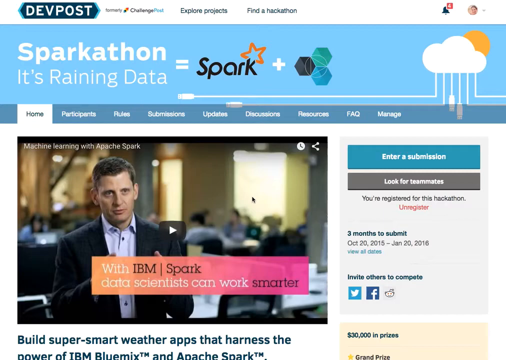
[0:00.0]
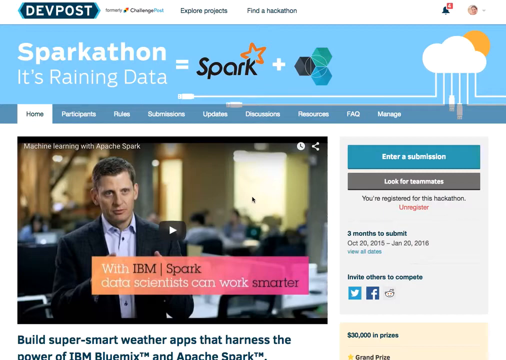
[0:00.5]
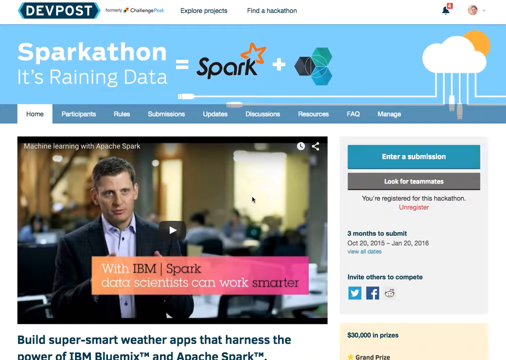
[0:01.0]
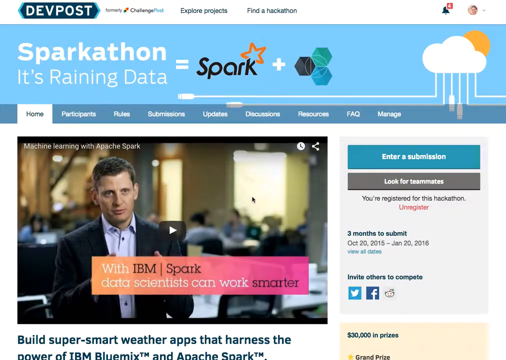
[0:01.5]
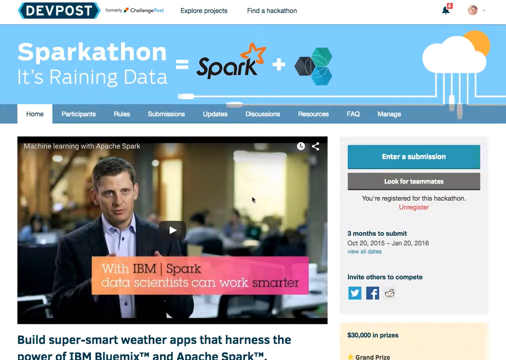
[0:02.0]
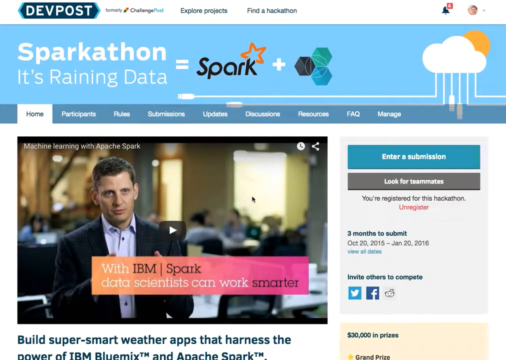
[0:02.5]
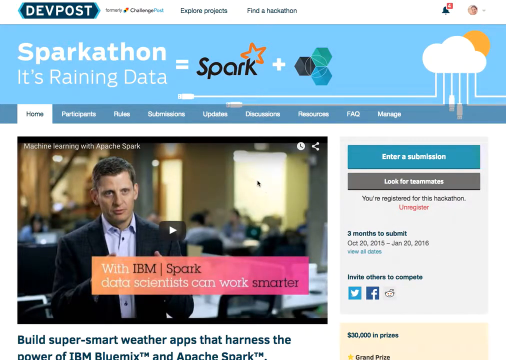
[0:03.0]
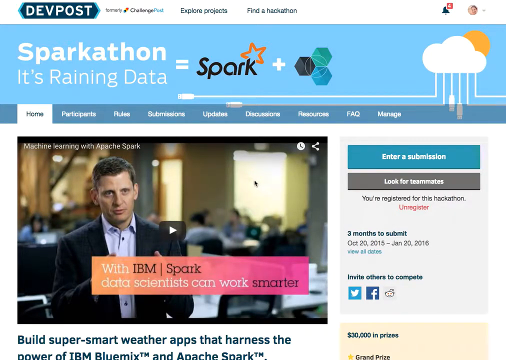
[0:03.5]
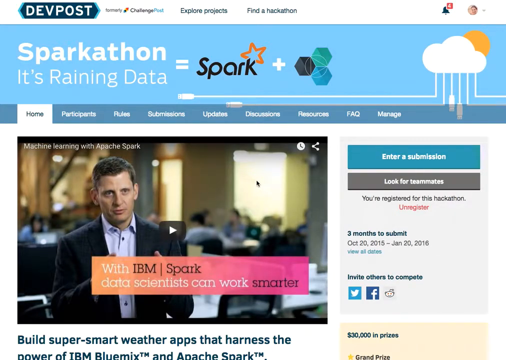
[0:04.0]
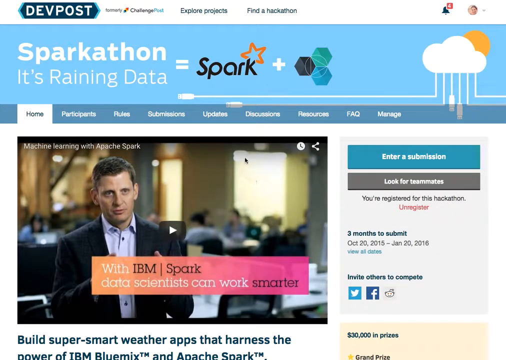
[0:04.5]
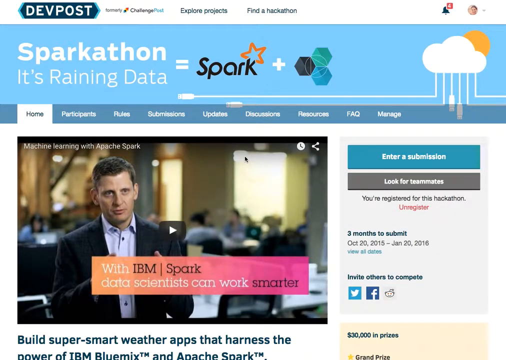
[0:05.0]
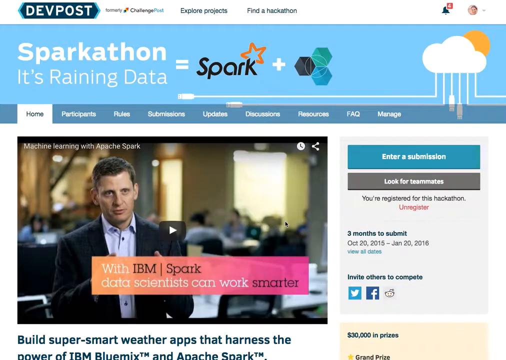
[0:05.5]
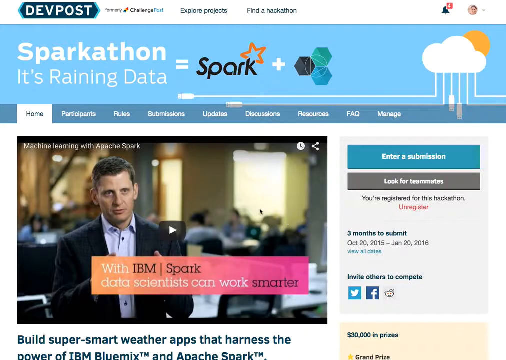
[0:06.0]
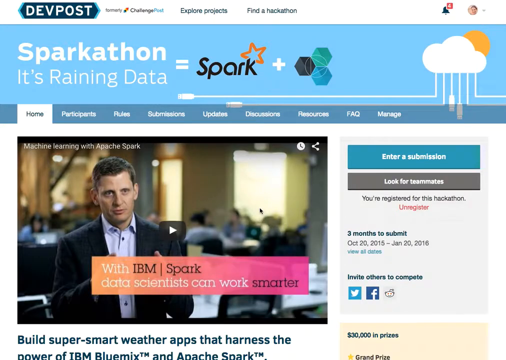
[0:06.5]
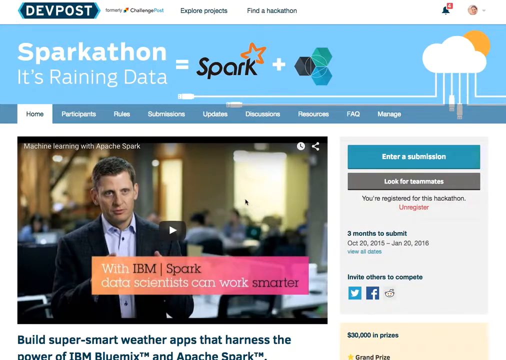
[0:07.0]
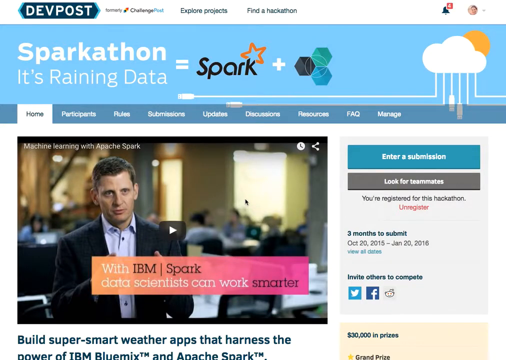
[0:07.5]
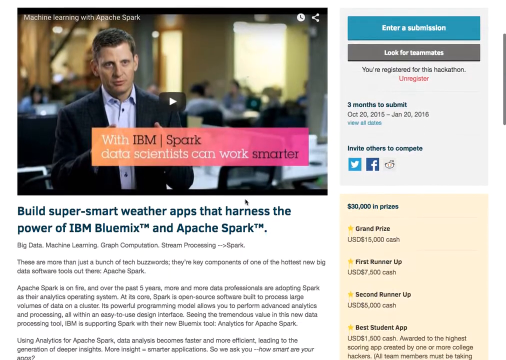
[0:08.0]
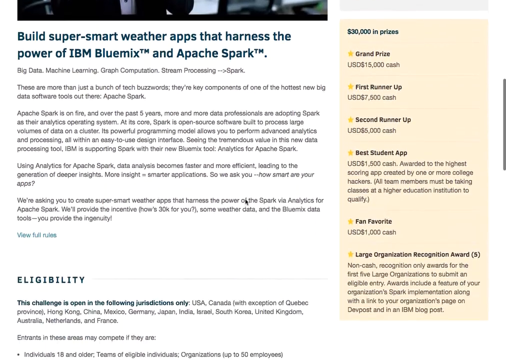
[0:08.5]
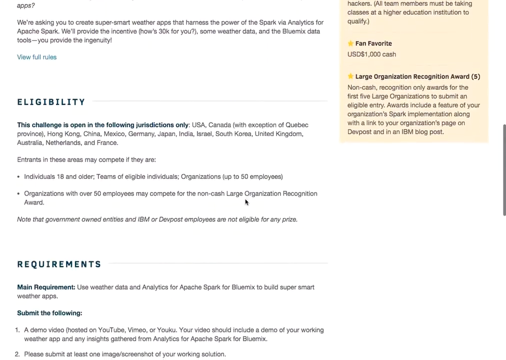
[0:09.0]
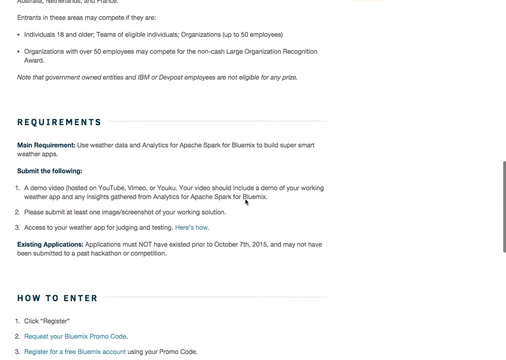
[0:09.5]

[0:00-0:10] The video opens on what looks like a website page, apparently the home page, since the home tab in the upper left is highlighted with a white square. A video has been placed on the left side of the page, and the page is being scrolled down. The background is white; the background of the video is the background of the web page. A mouse pointer is visible.